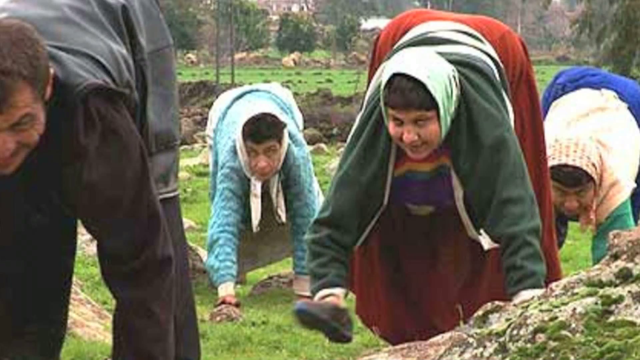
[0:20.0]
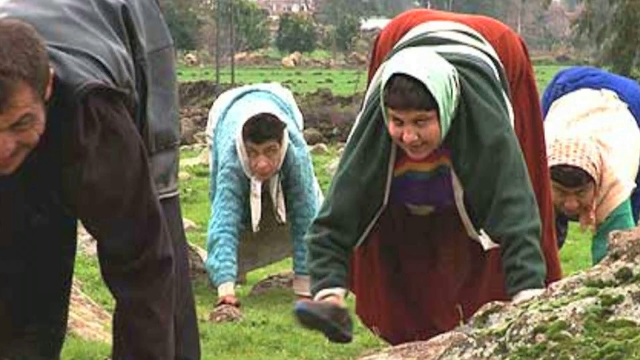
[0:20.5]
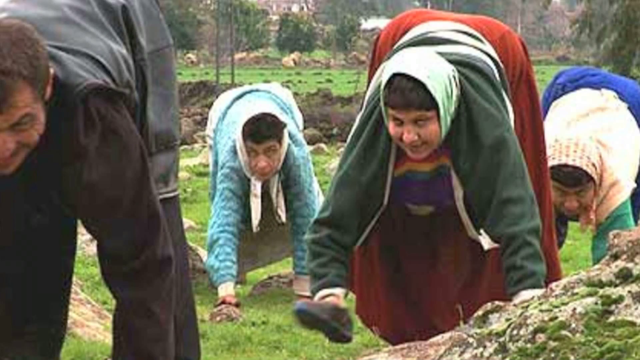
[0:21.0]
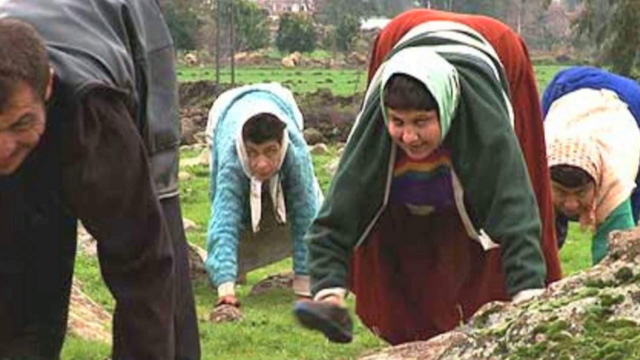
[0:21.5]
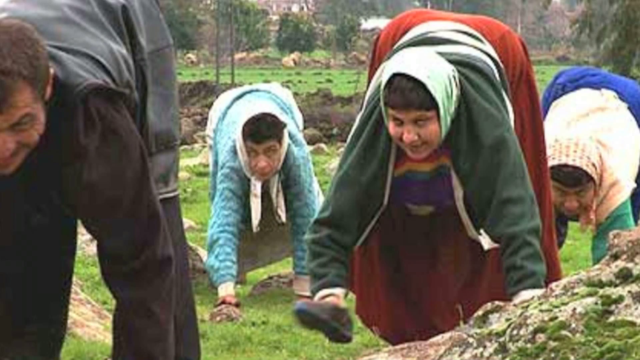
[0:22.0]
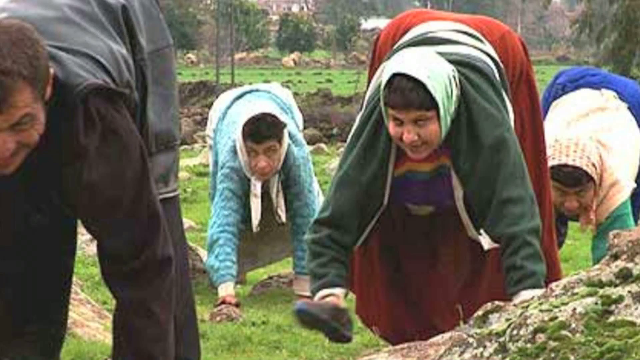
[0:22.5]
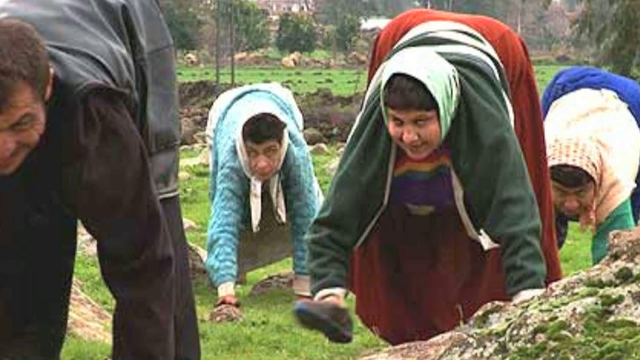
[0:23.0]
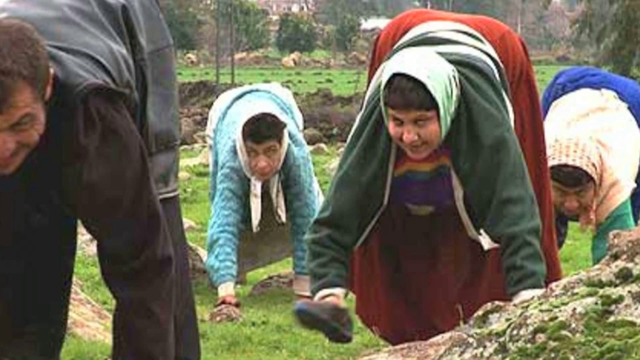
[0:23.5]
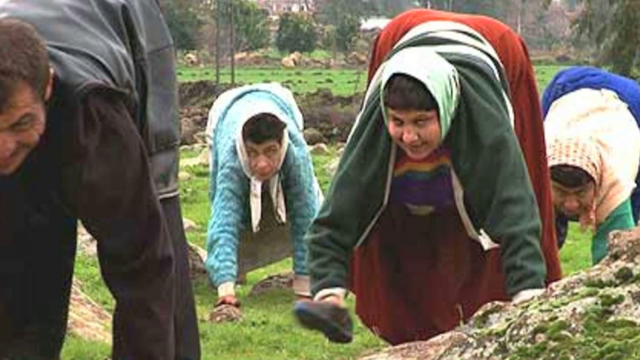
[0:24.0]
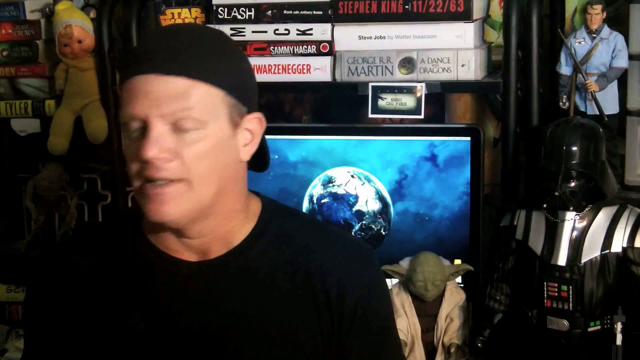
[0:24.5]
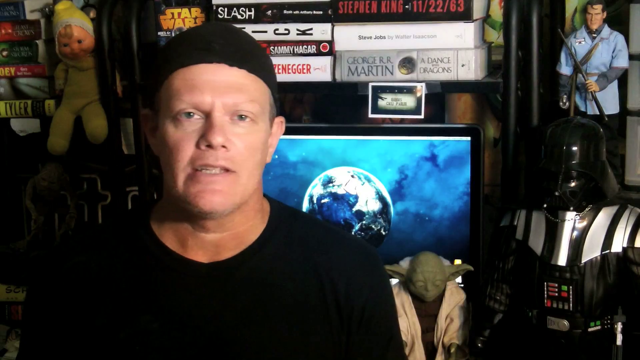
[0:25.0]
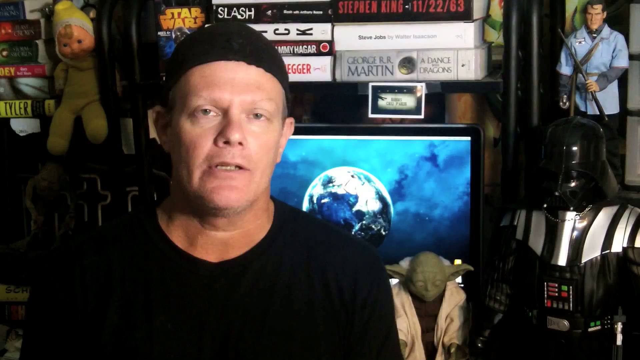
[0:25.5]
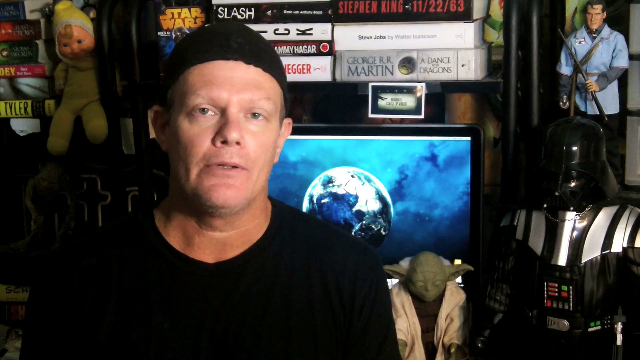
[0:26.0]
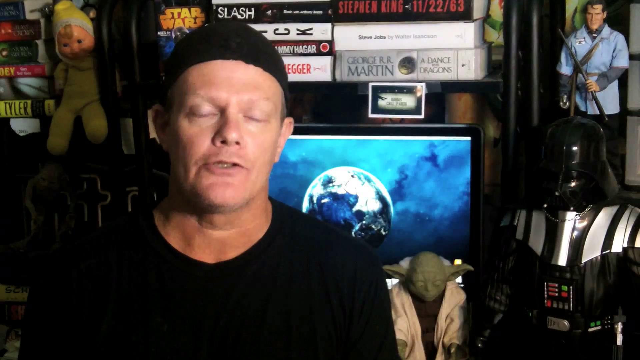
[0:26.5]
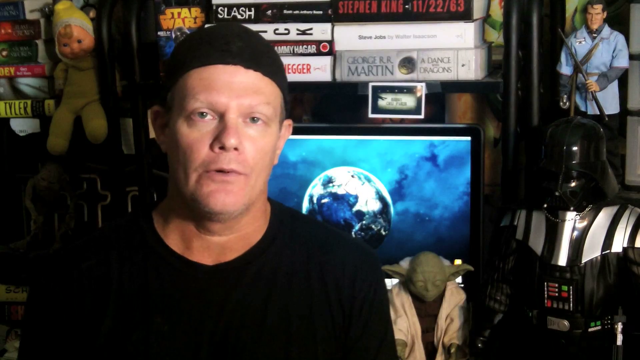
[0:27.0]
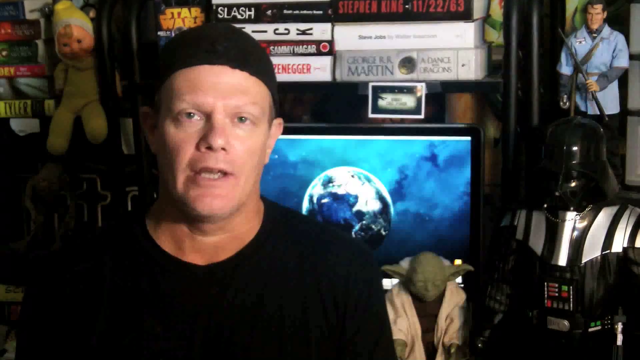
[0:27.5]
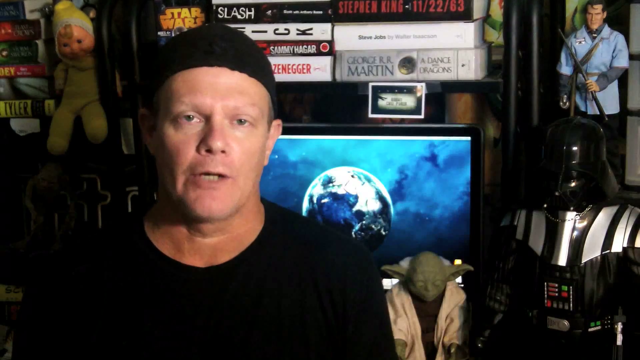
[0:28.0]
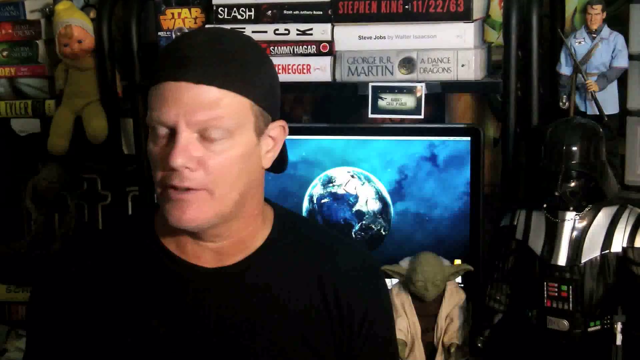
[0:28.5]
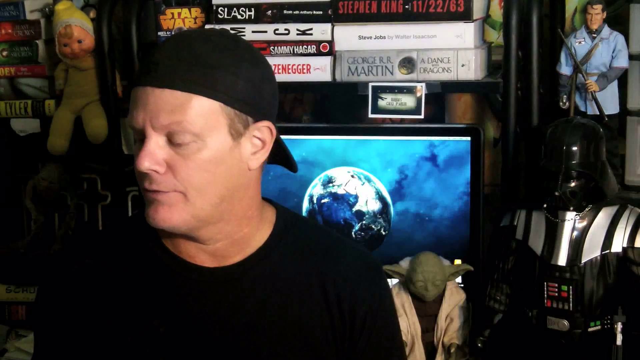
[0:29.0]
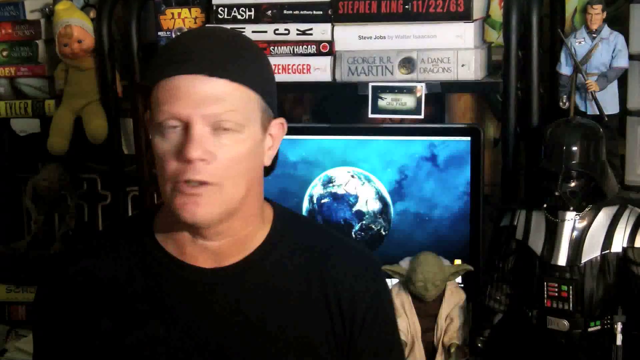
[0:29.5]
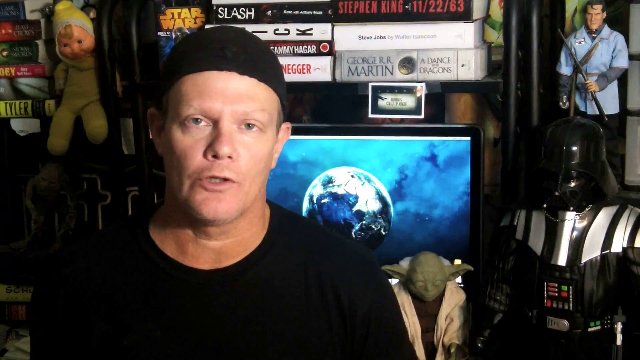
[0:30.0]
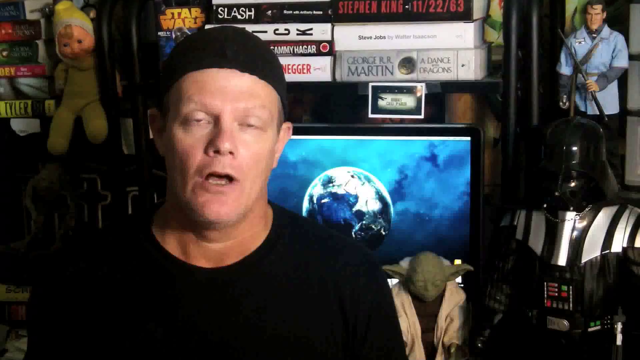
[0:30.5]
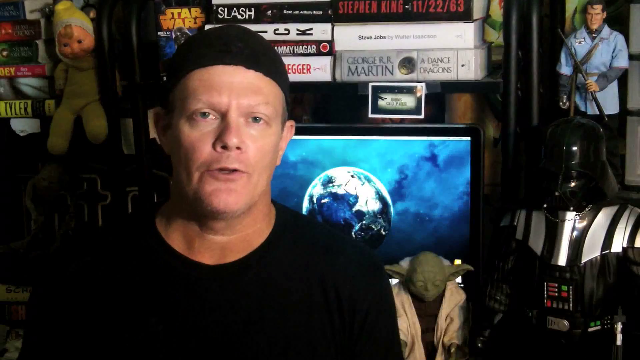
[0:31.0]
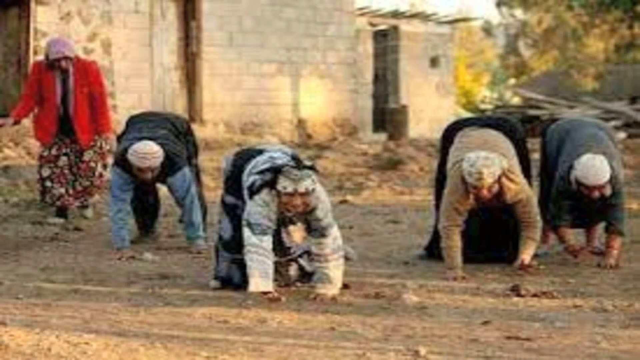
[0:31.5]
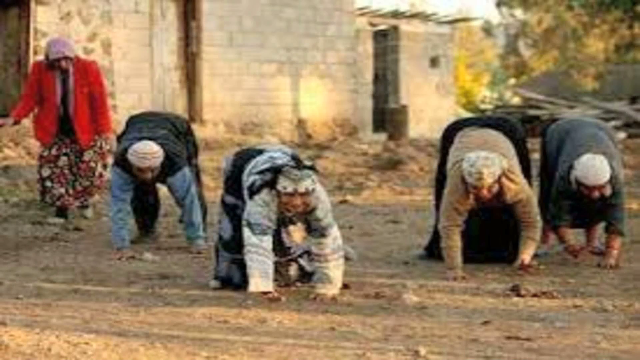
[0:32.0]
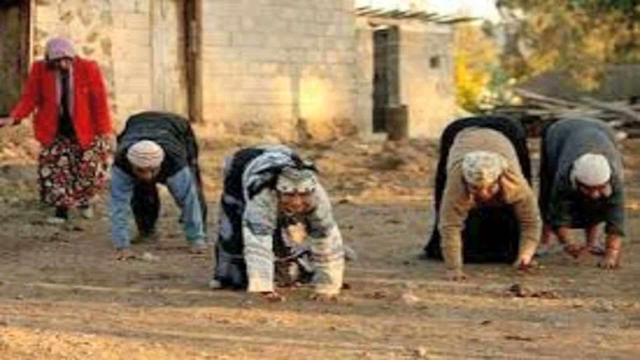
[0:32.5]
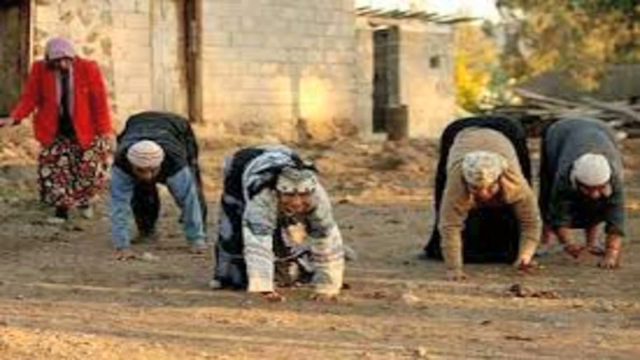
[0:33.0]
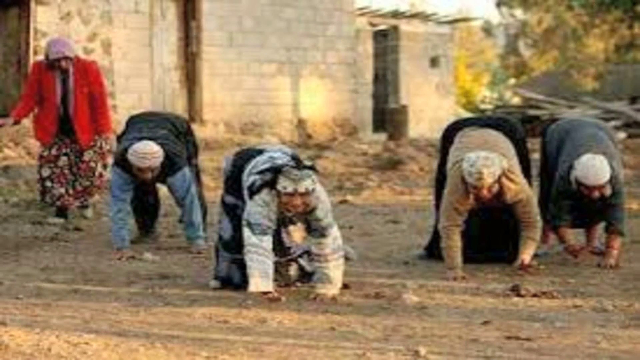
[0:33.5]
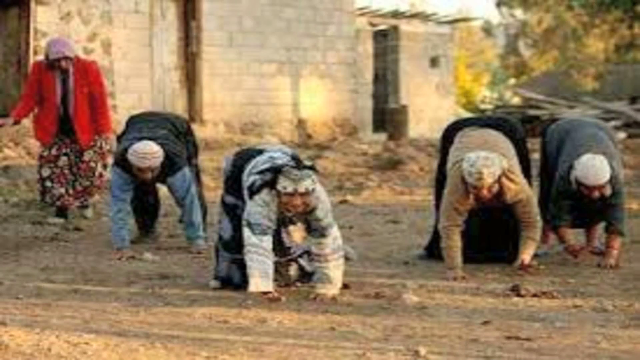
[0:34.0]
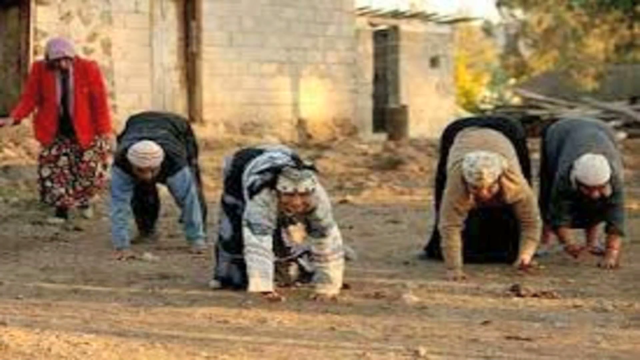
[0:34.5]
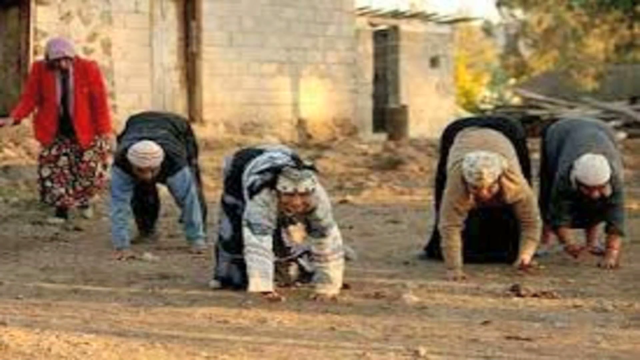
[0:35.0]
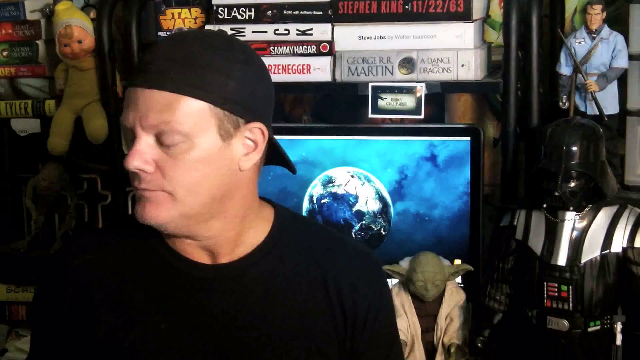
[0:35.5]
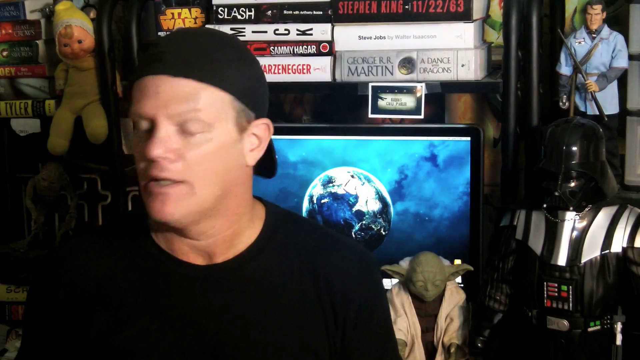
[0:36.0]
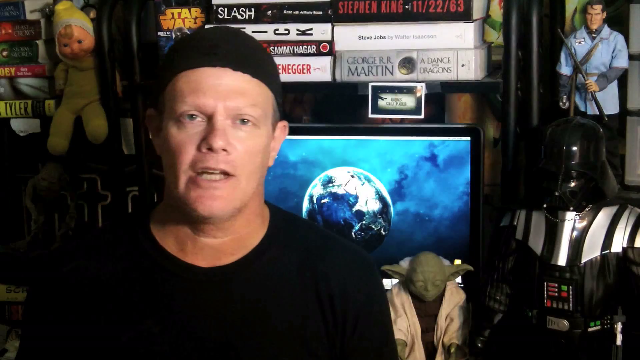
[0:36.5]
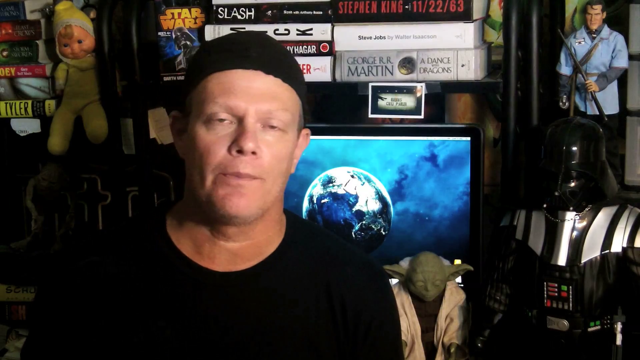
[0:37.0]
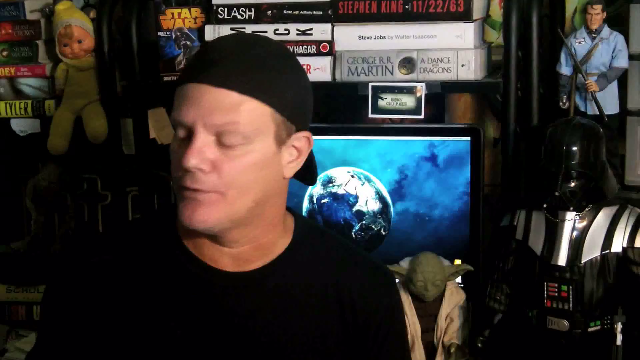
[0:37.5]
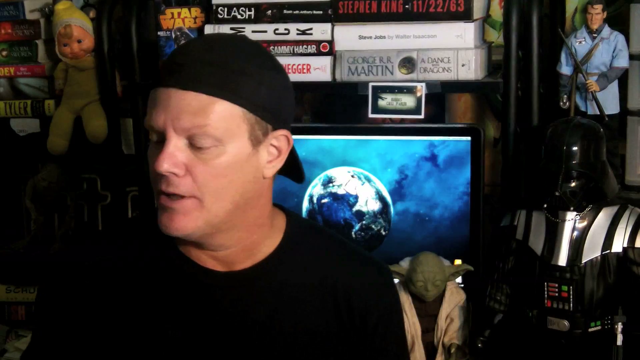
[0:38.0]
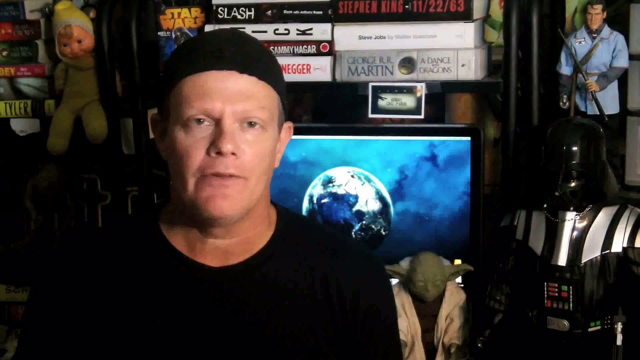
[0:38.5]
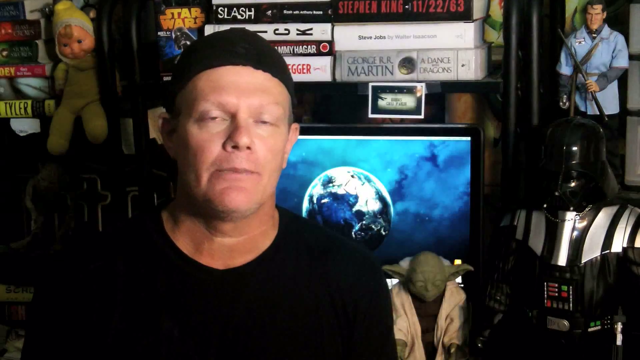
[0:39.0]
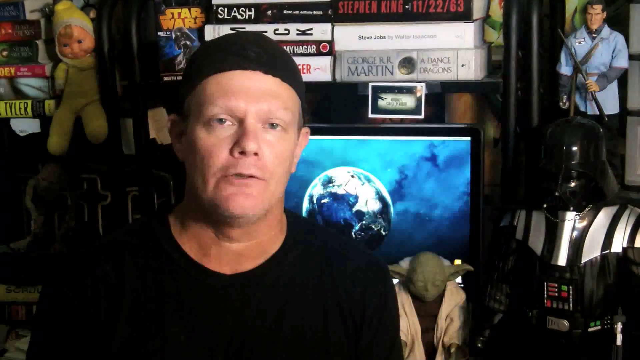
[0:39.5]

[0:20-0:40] A woman in a red dress, a woman in a blue dress and a man in a grey dress are doing the cat pose with shoes in their hands, apparently pretending to walk. The man in the black hat commentates; behind him is a television screen with a globe, and there are some type of dolls on the left and the right. Another group of people walks in the same manner in some kind of village, with brick walls behind them.